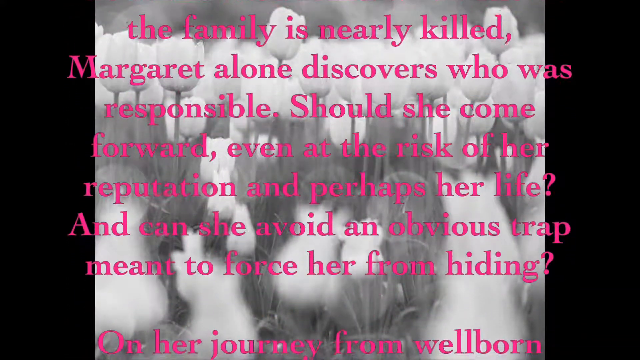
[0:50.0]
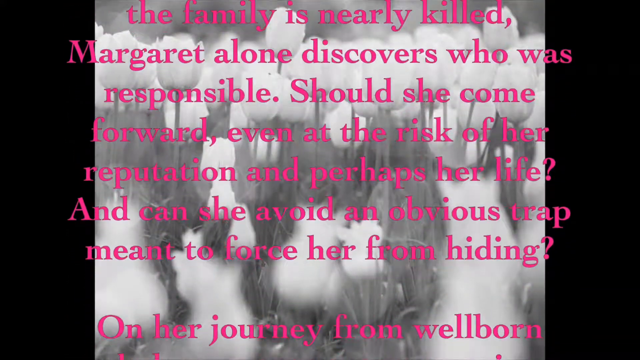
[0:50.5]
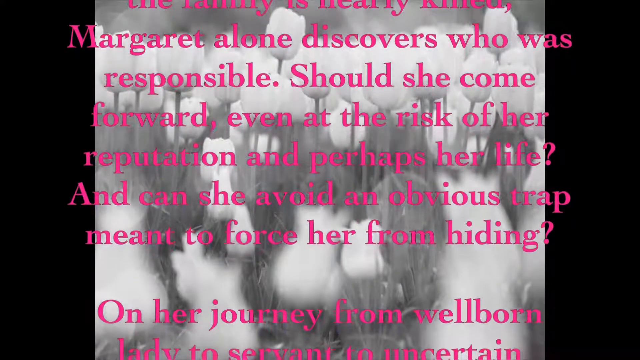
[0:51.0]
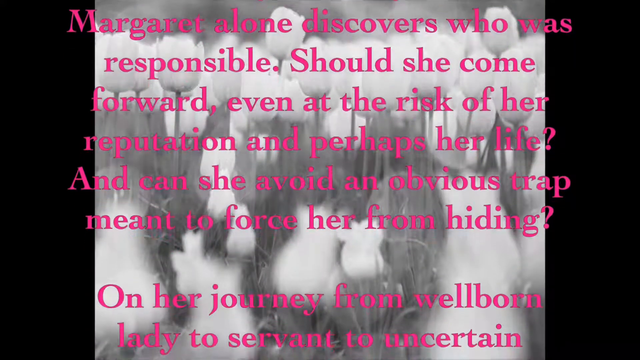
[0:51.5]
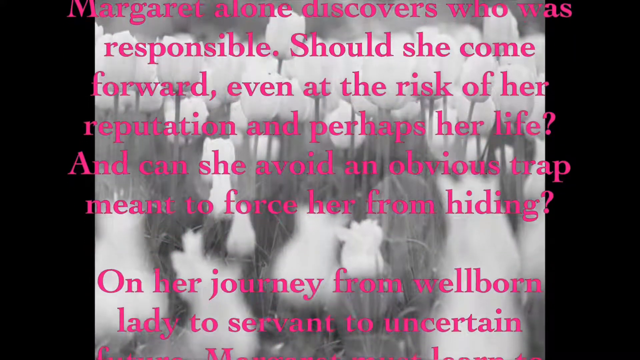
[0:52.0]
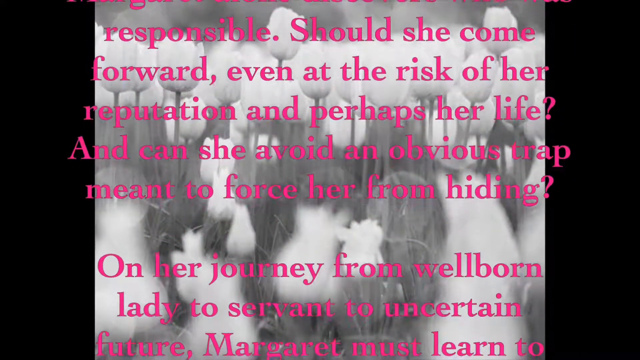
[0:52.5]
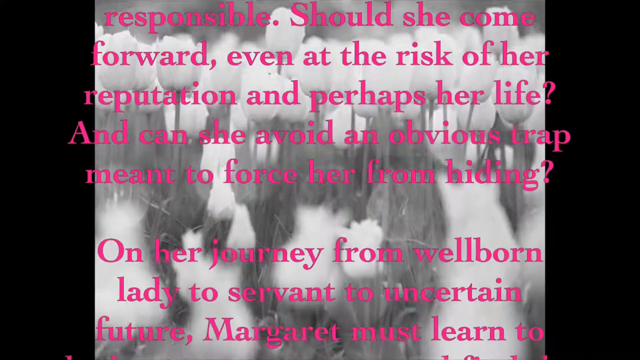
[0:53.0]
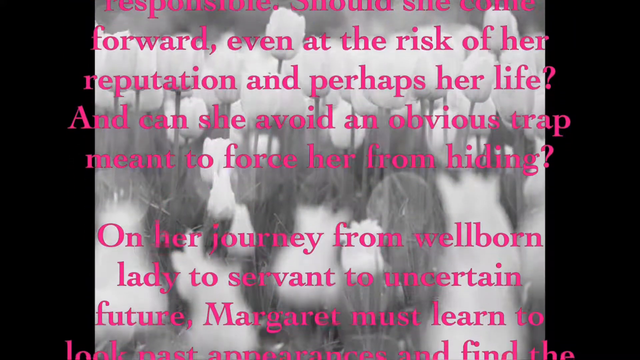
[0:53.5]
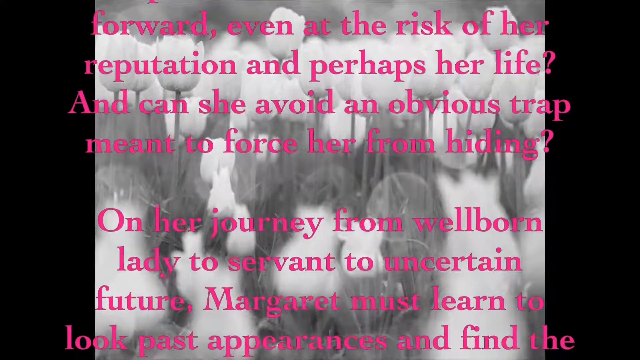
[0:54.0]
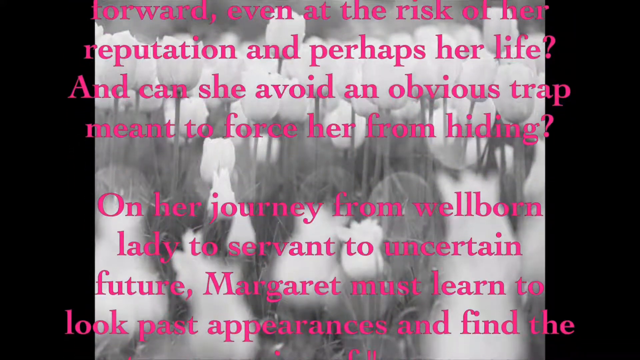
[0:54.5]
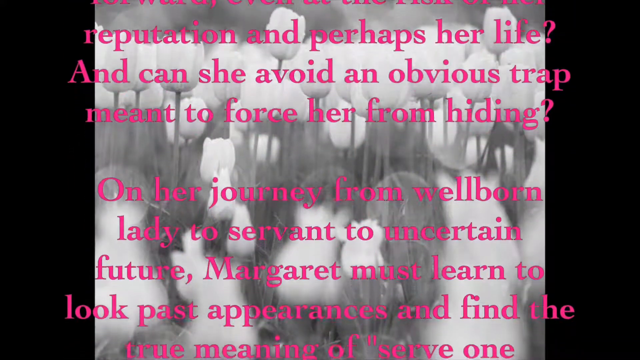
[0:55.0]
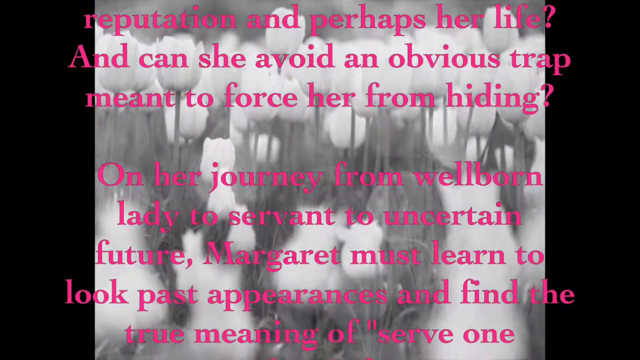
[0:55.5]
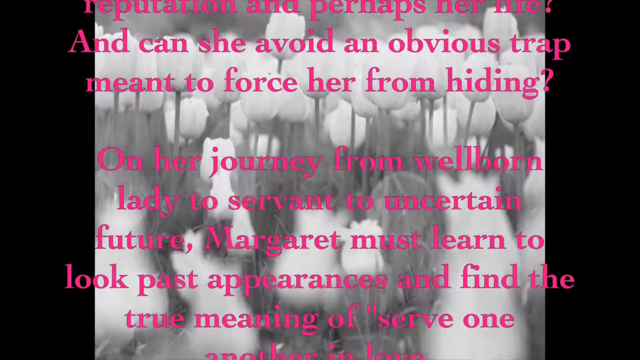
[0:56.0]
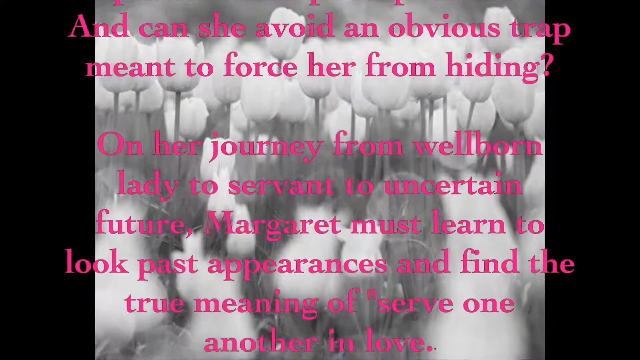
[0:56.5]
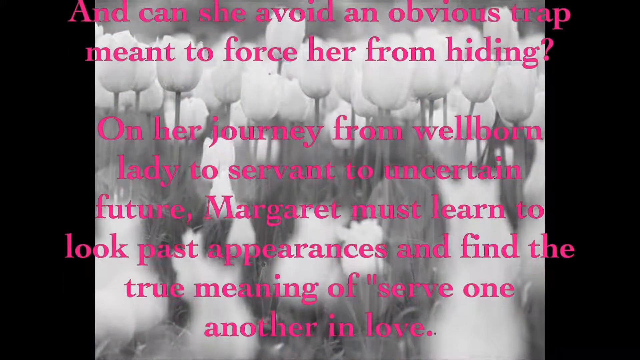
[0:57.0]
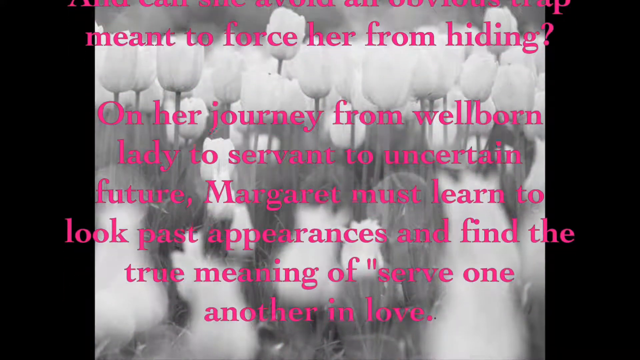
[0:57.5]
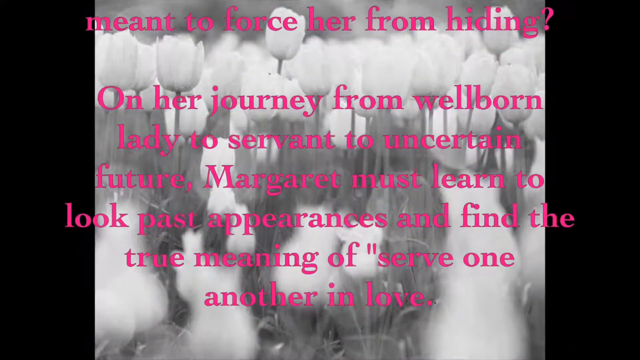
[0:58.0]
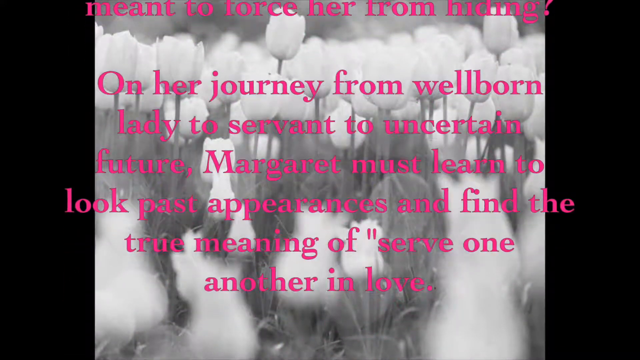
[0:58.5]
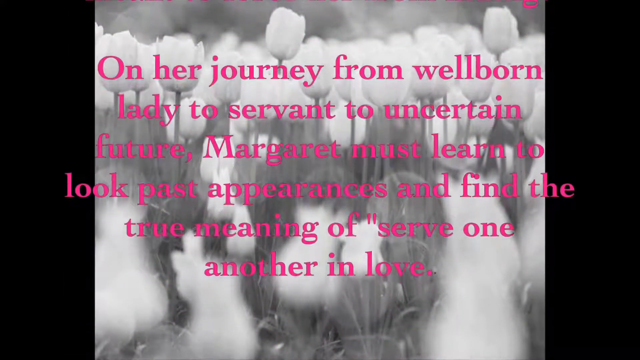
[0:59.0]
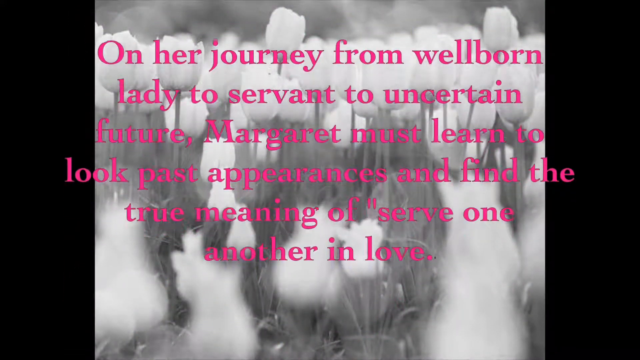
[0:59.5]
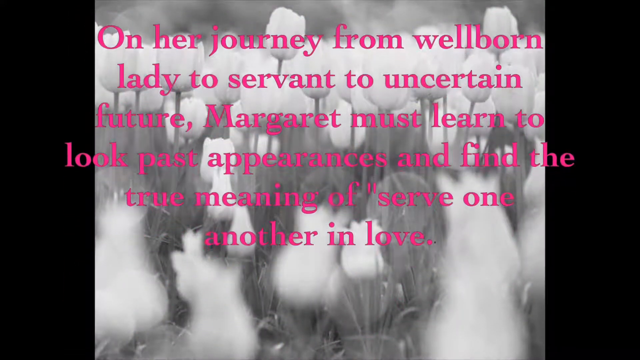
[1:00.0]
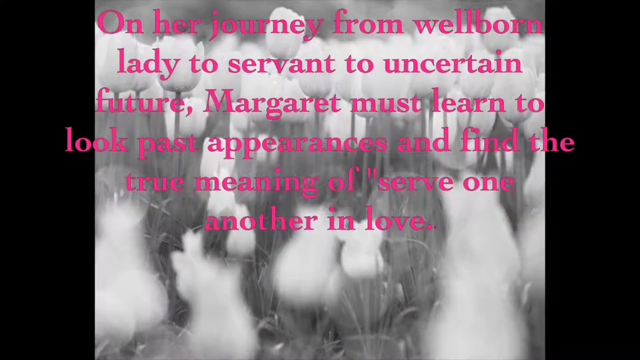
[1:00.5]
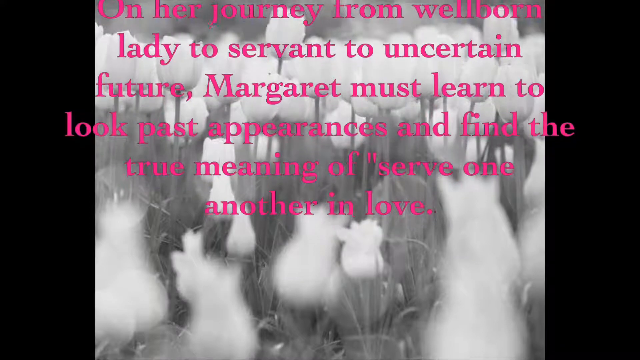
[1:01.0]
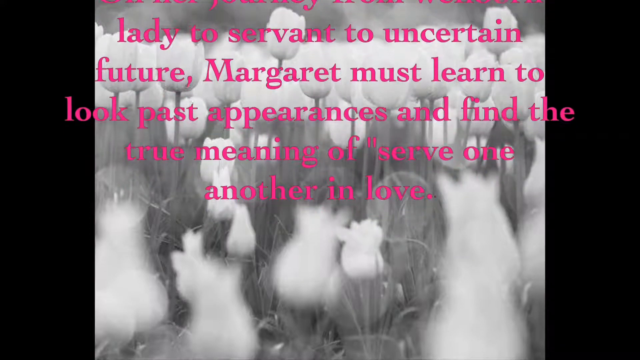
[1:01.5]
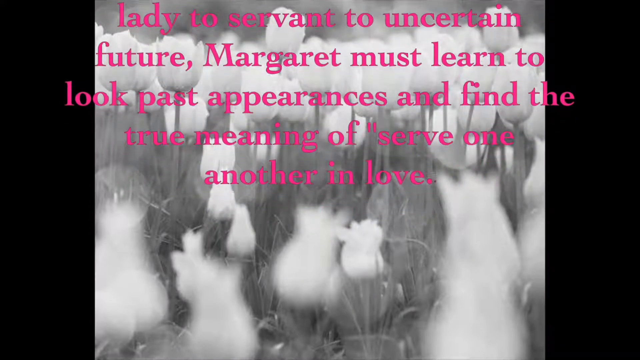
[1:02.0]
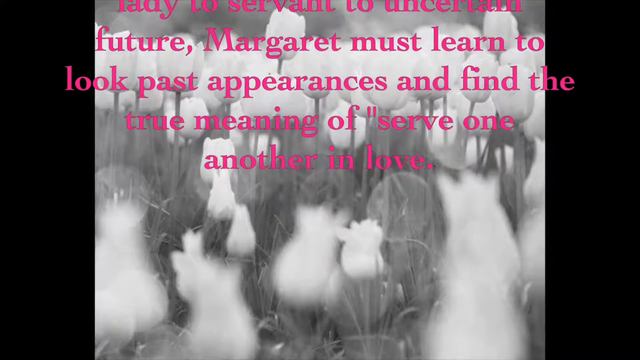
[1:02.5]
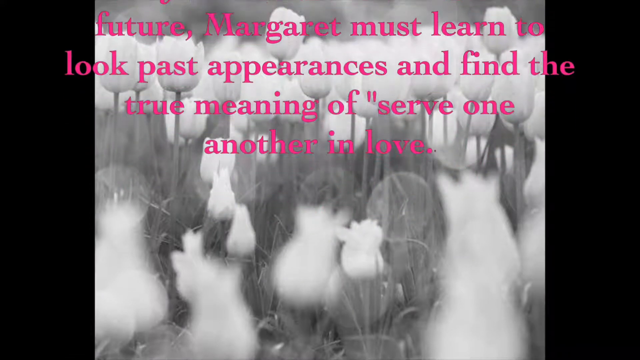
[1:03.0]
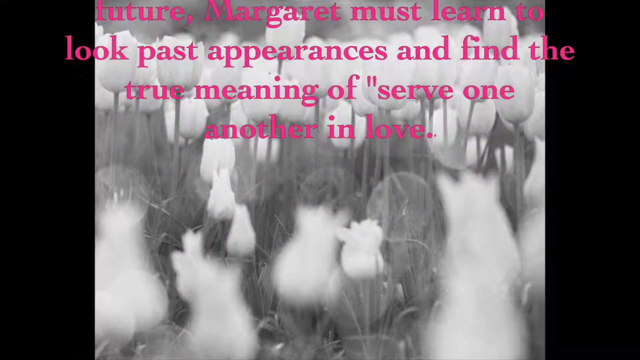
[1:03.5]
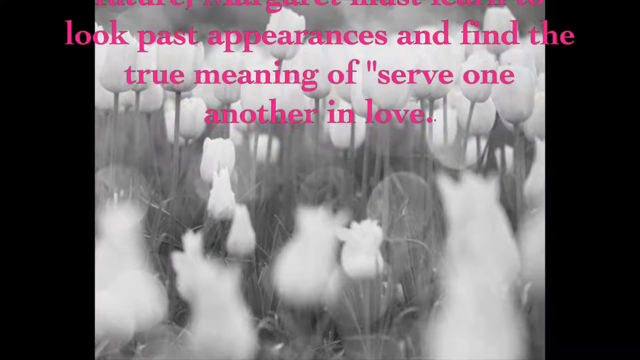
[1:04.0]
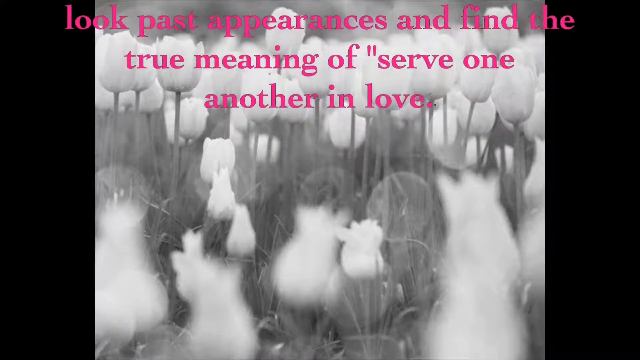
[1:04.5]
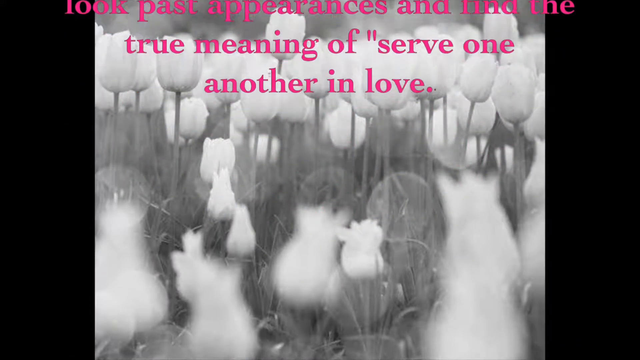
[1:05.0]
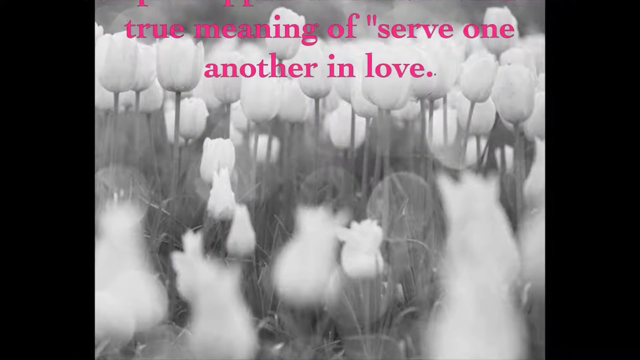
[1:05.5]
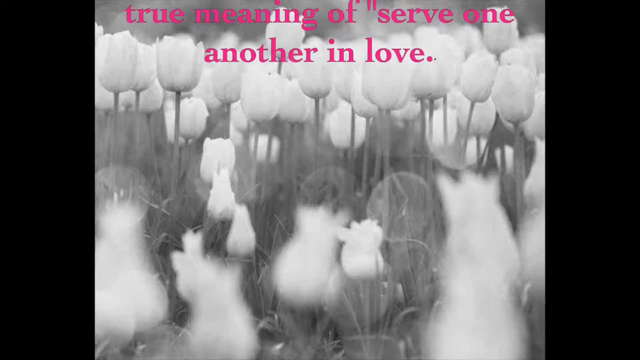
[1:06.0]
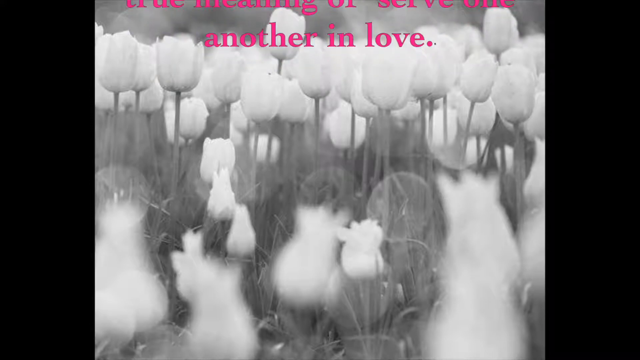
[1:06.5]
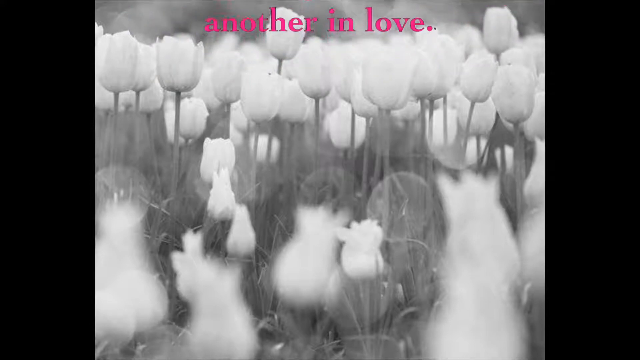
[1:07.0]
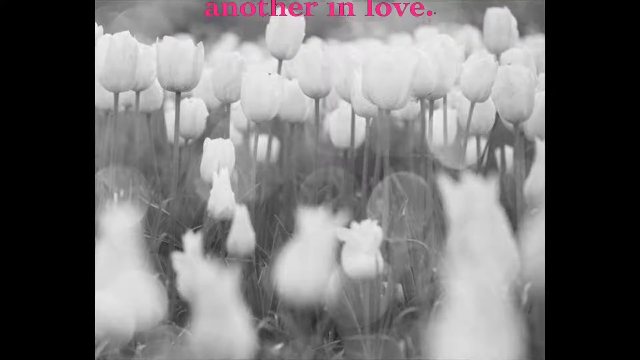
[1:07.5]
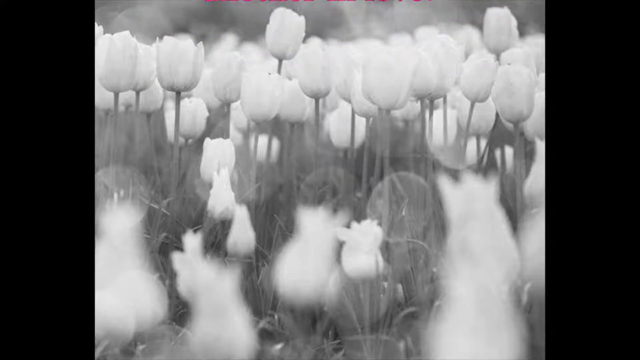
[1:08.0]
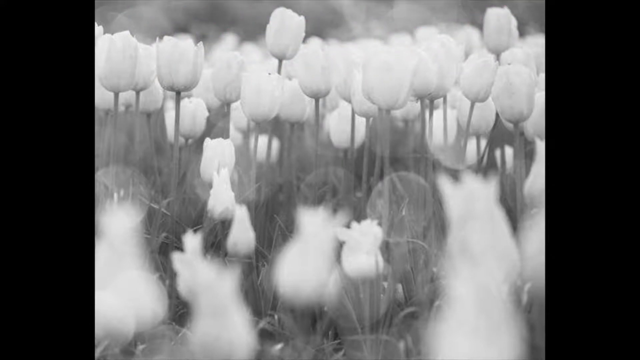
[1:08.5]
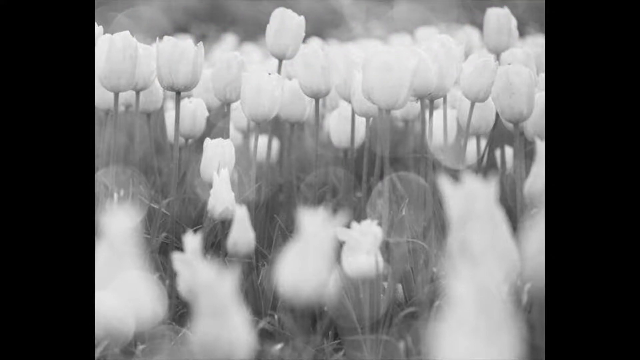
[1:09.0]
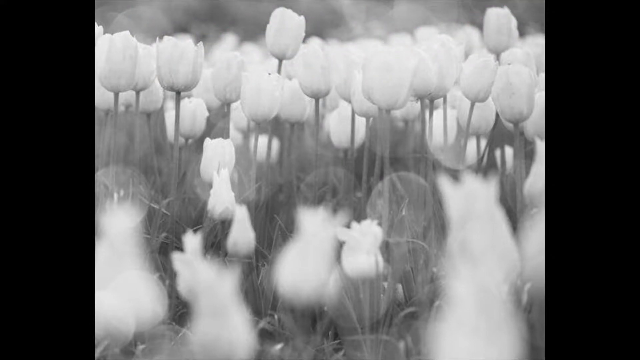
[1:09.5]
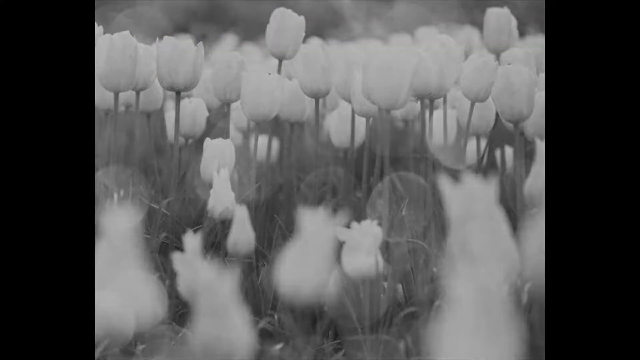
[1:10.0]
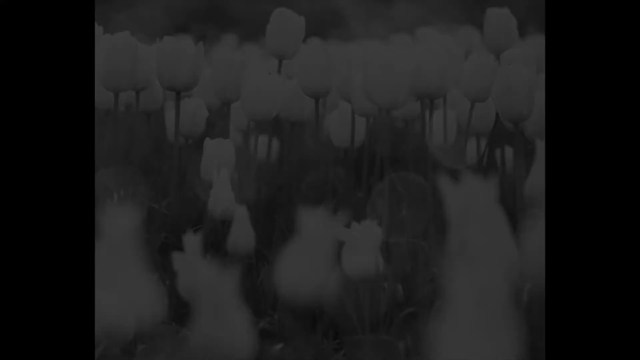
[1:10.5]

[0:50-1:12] The text continues in the same style: "The family is nearly killed. Margaret alone discovers who was responsible. Should she come forward, even at the risk of her reputation and perhaps her life? And can she avoid an obvious trap meant to force her from hiding? On her journey from well-born lady to servant to an uncertain future, Margaret must learn to look past appearances and to find the true meaning of serve one another in love." The text appears from the bottom of the screen, rises slowly, almost slow enough to read straight away, goes all the way up into the upper area and fades away, like the ending of a movie.